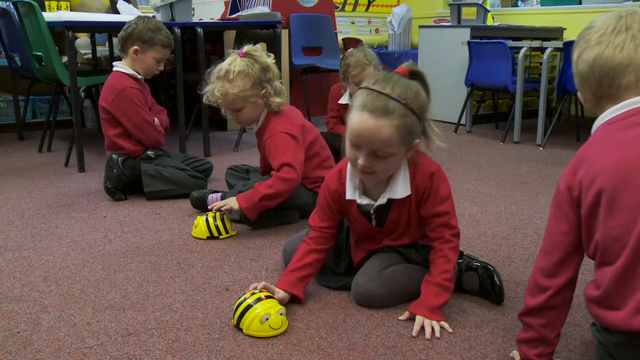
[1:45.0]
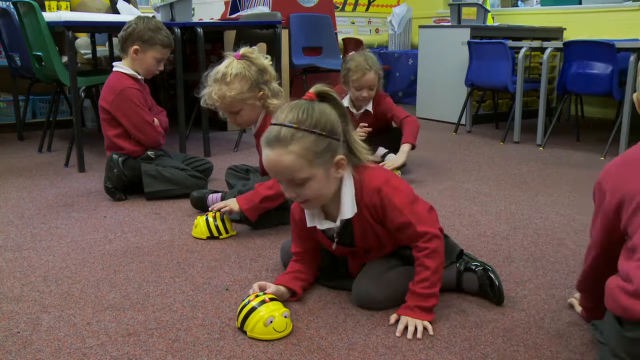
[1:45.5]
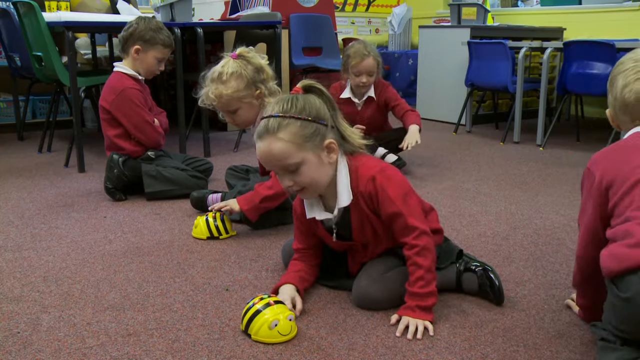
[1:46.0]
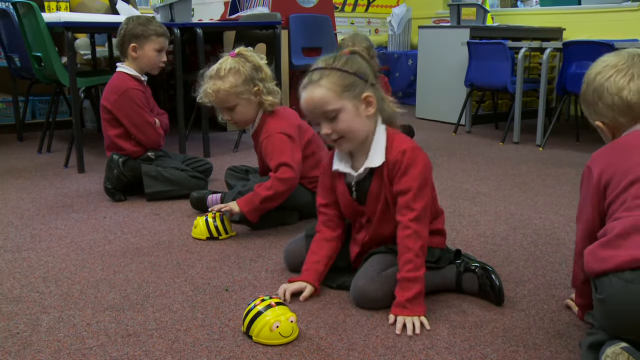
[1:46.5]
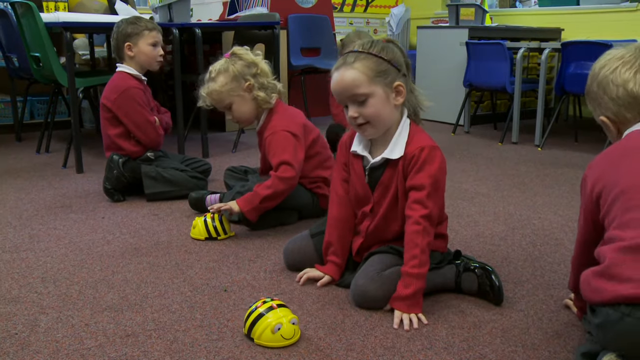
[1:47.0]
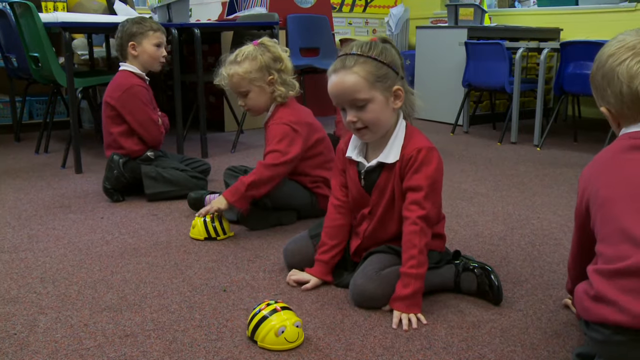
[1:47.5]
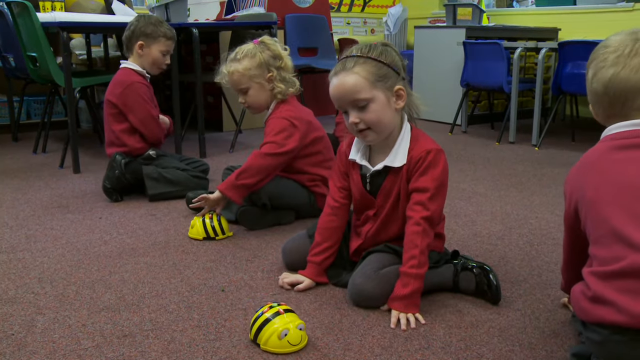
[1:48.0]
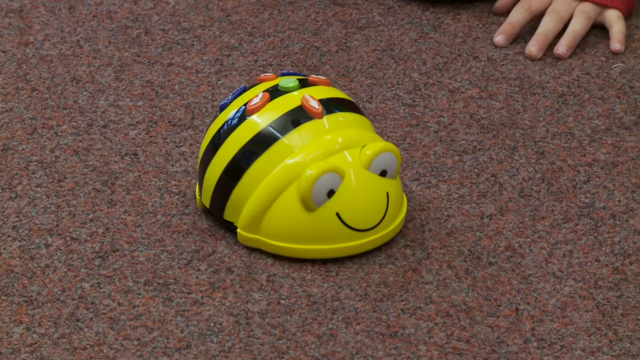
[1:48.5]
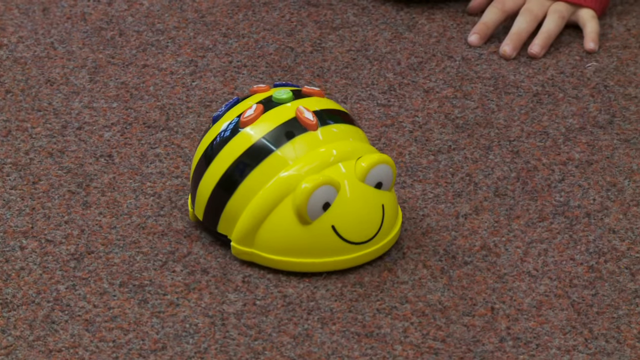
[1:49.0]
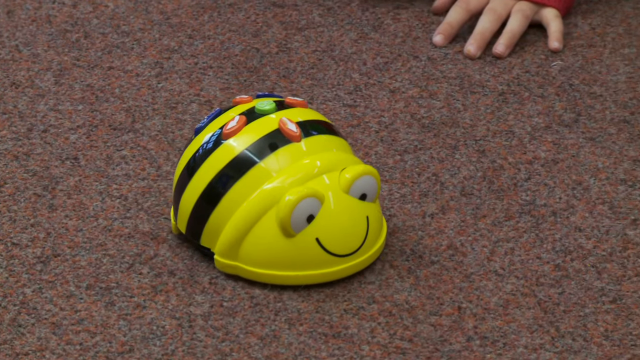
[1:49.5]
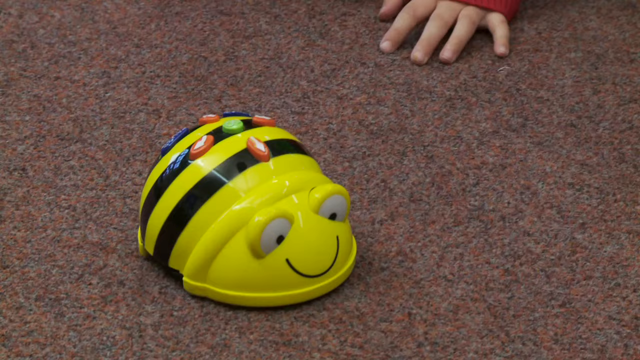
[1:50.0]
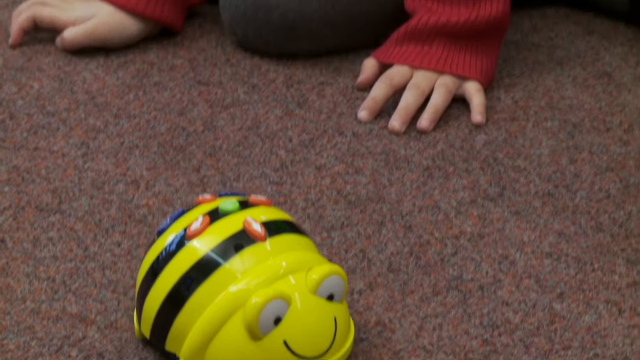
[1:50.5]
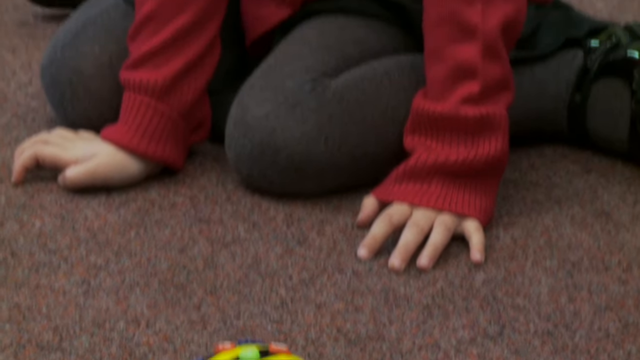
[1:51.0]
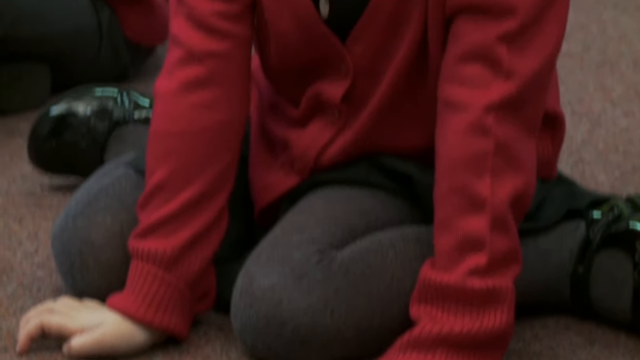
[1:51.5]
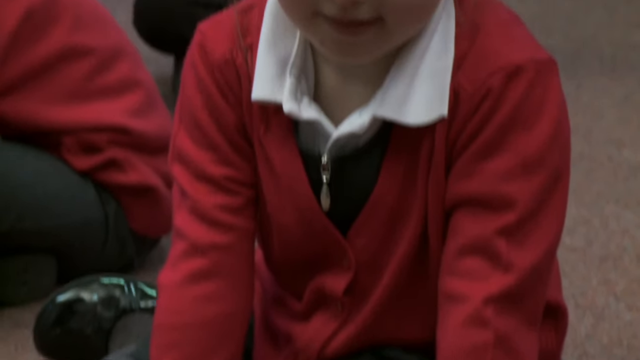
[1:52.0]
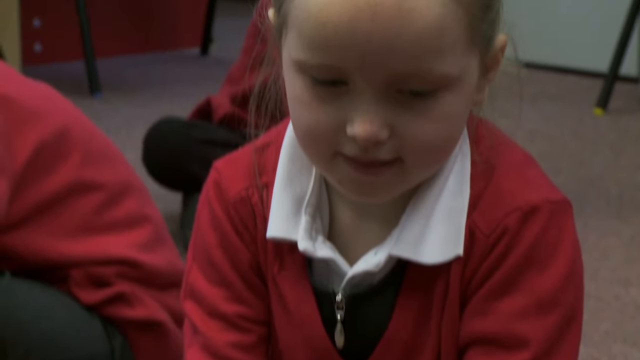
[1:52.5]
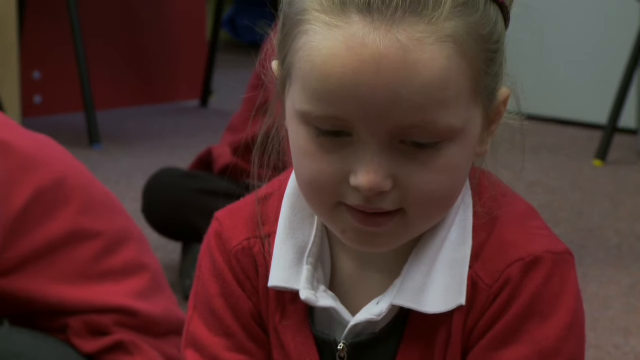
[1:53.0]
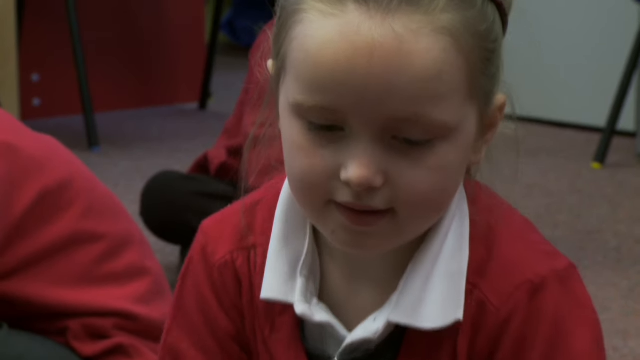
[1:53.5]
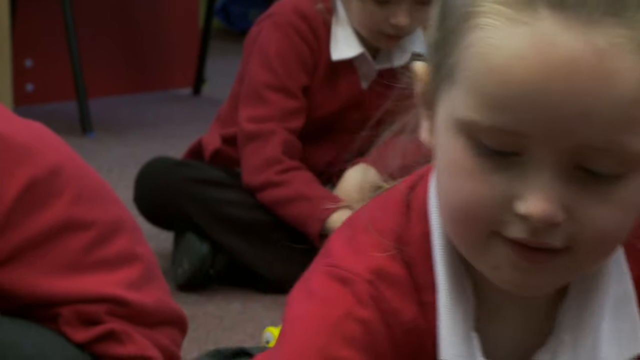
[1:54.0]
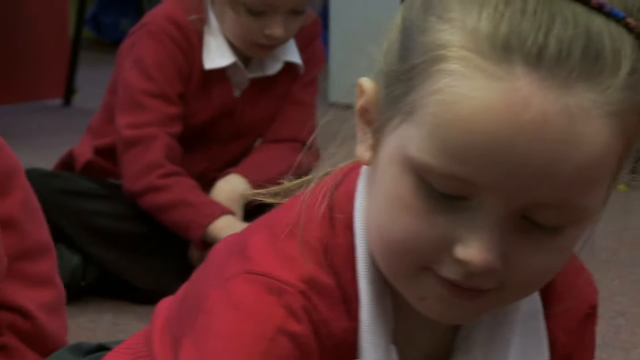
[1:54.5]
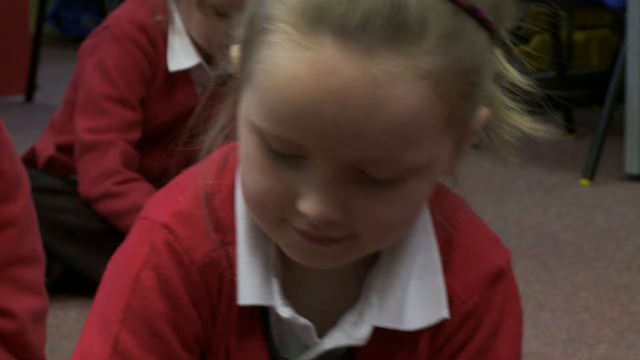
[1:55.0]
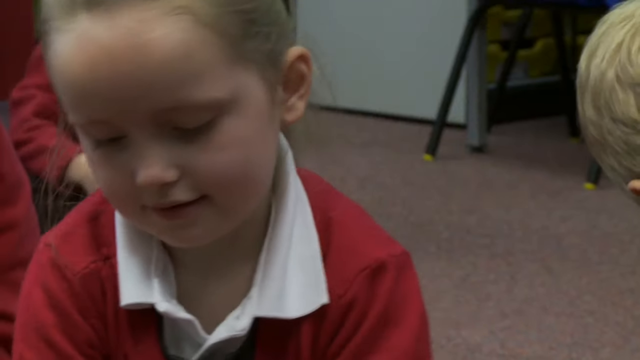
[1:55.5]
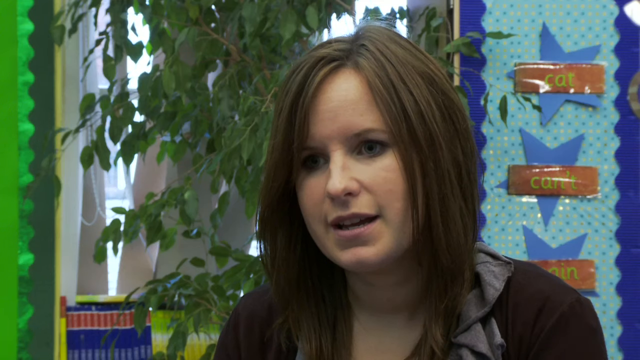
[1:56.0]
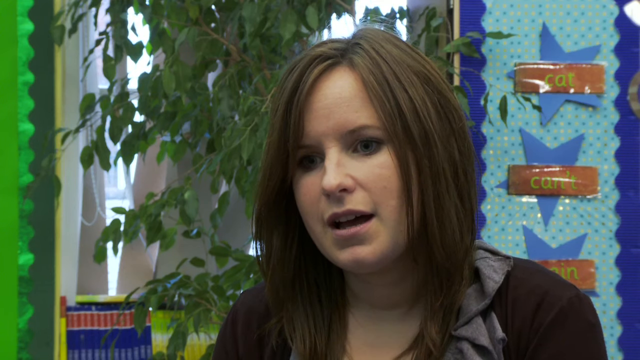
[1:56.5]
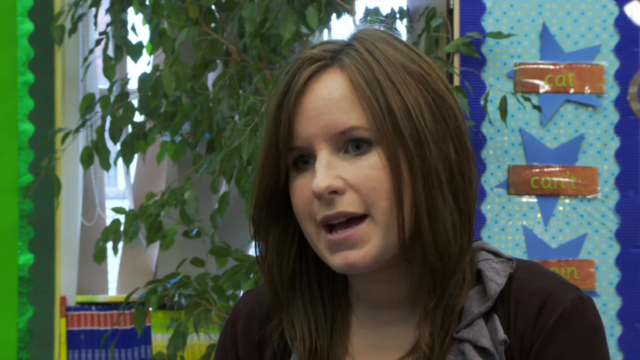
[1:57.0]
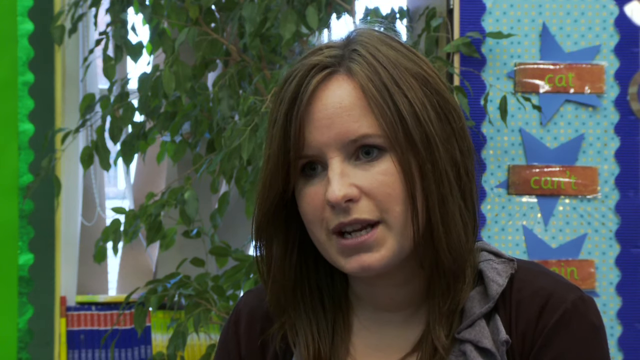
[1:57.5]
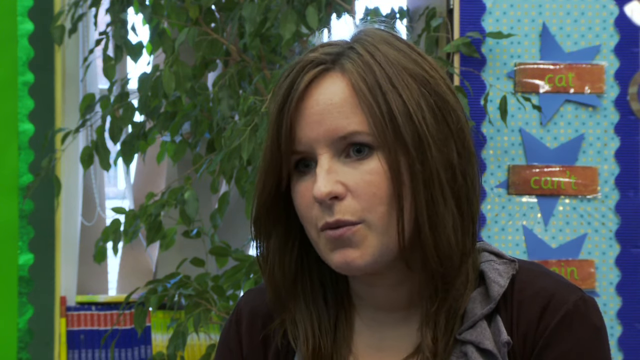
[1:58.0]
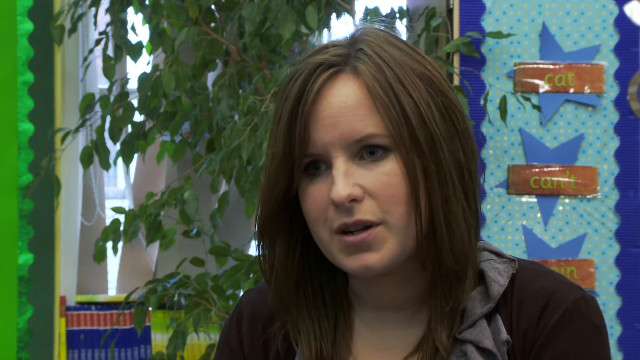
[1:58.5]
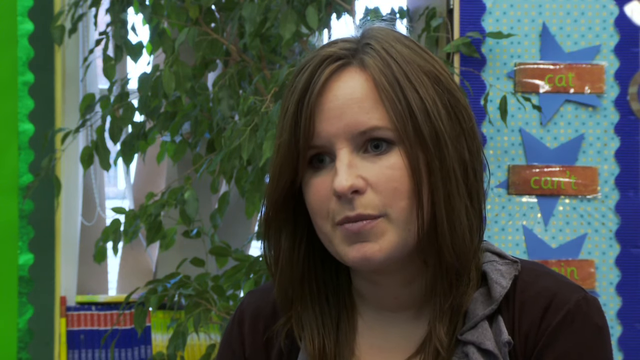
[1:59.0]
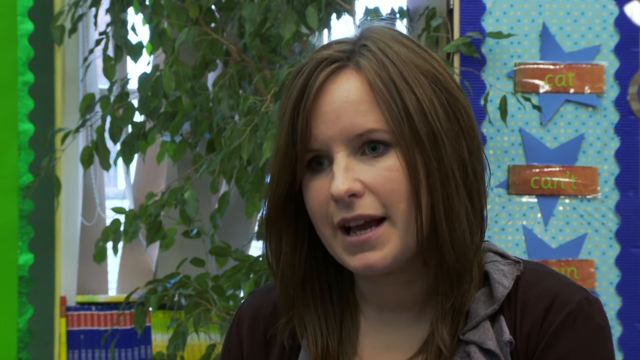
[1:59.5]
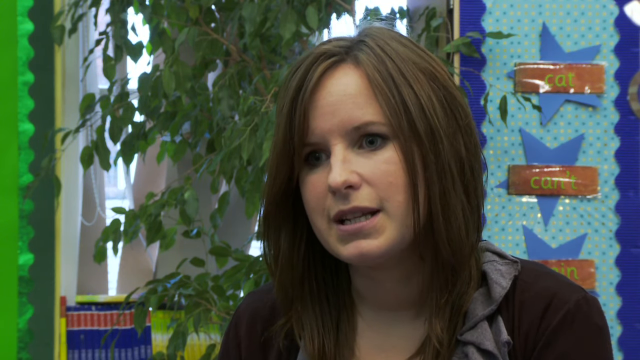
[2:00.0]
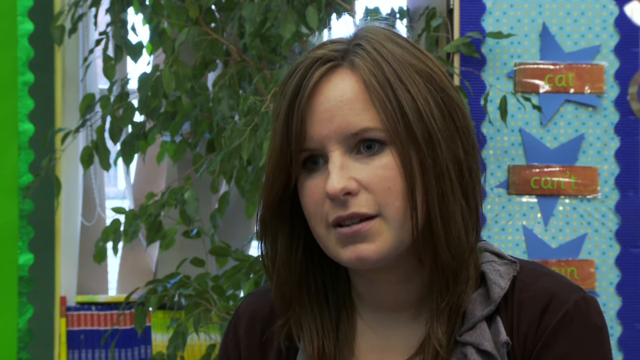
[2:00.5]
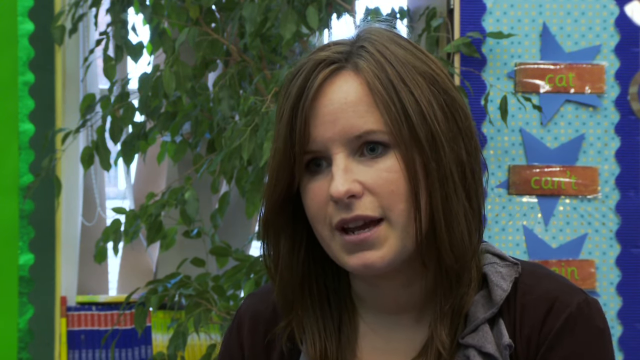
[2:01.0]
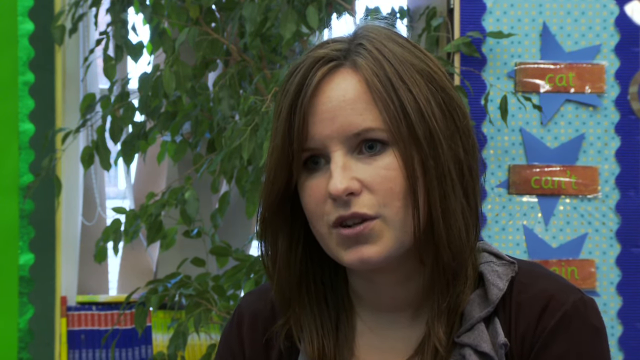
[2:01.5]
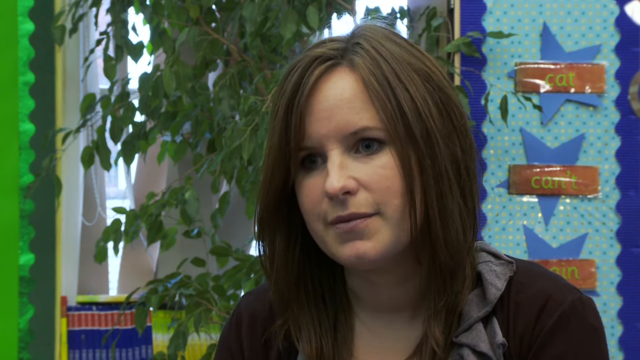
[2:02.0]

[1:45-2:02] The children are still playing with the two bee bots. Close-ups show the children pressing buttons and looking down at the toy. The view then switches to a close-up of the instructor talking, seen only from the shoulders up. She is a young white woman with brunette hair and either blue or green eyes. There are not enough bee bots for all the children to play at the same time, but they seem to play with them cooperatively in small groups. In the instructor's close-up, a large plant is visible, as is a classroom-made banner with different C words such as "cat" and "can't" on a blue background with blue trim. Each word is written in green on a brown laminated piece of paper, placed over large blue stars.